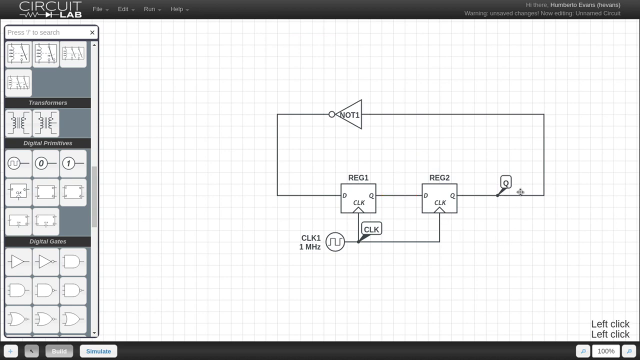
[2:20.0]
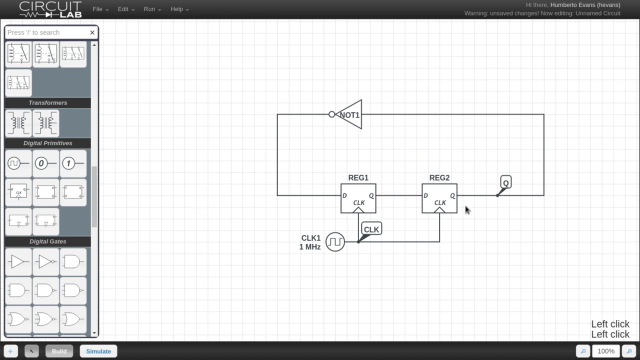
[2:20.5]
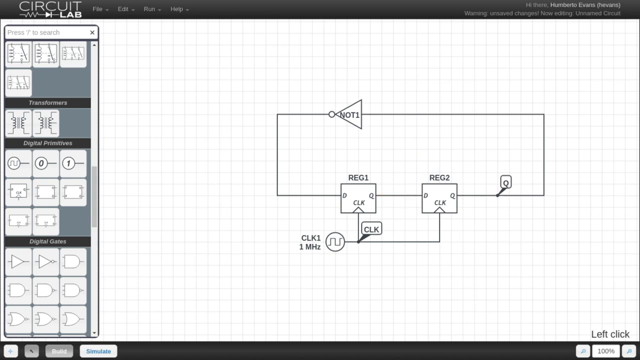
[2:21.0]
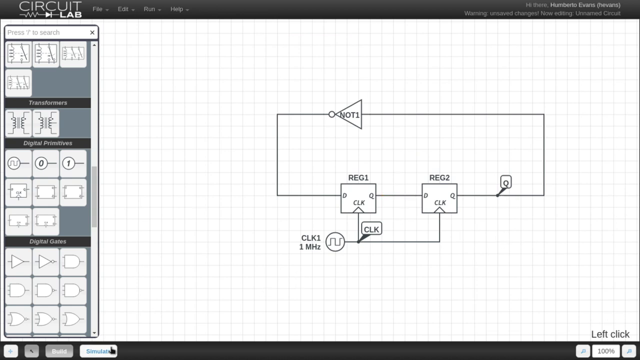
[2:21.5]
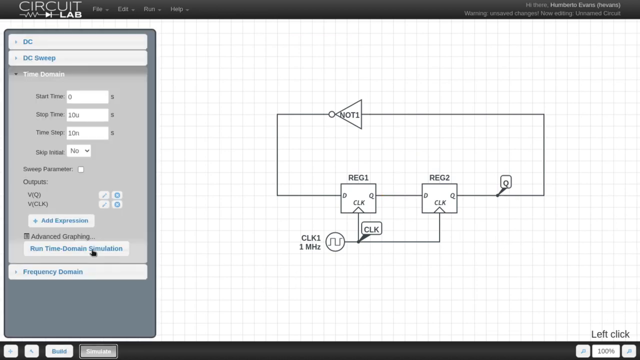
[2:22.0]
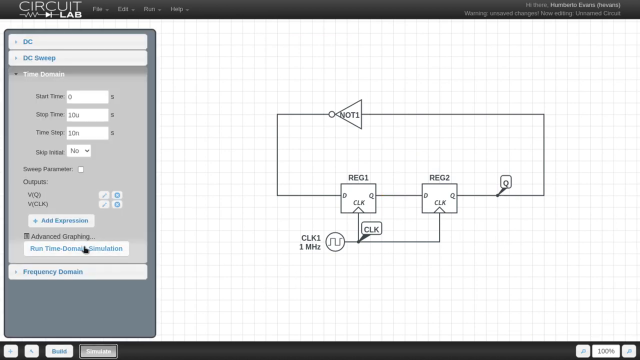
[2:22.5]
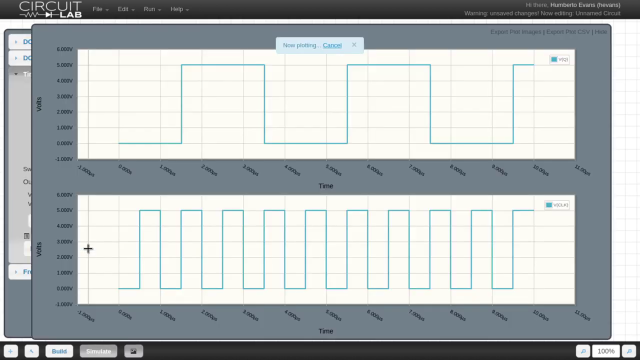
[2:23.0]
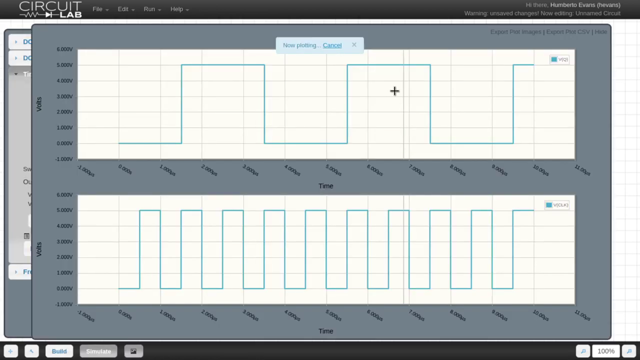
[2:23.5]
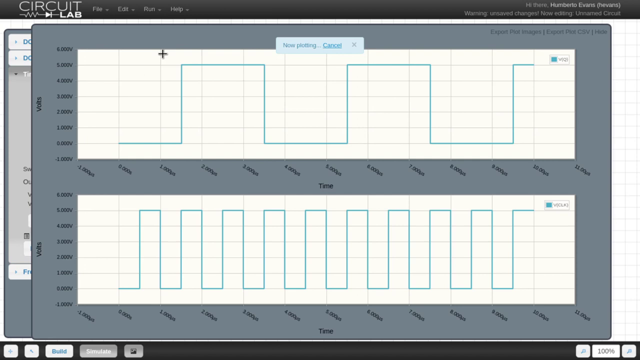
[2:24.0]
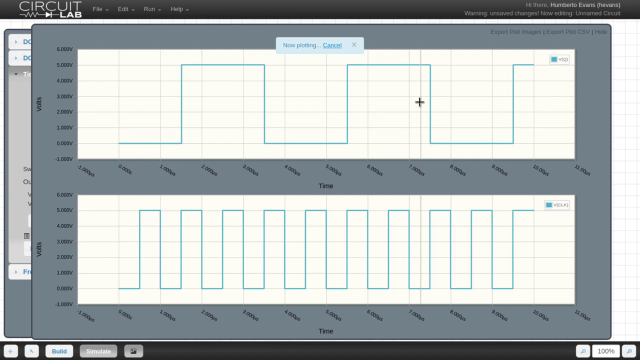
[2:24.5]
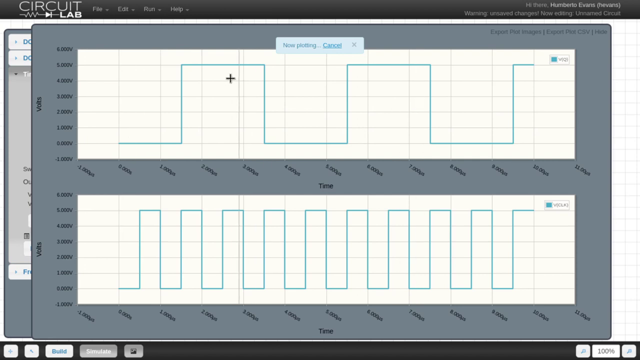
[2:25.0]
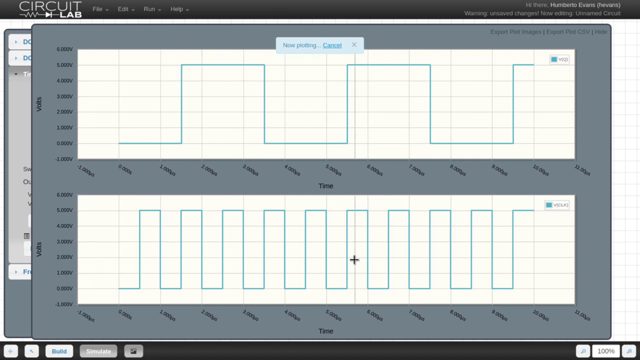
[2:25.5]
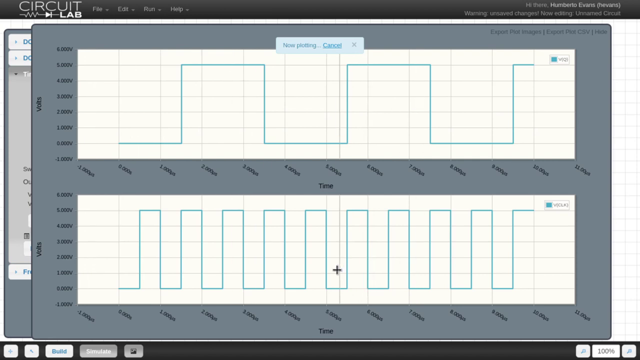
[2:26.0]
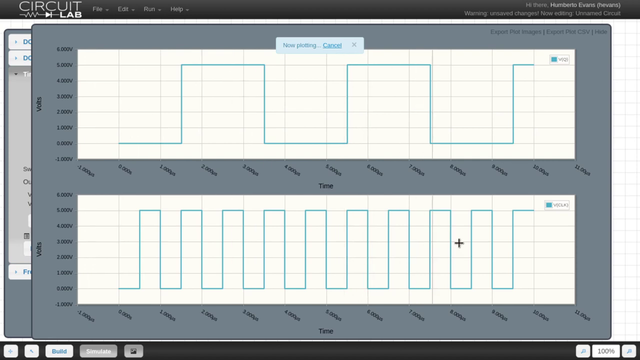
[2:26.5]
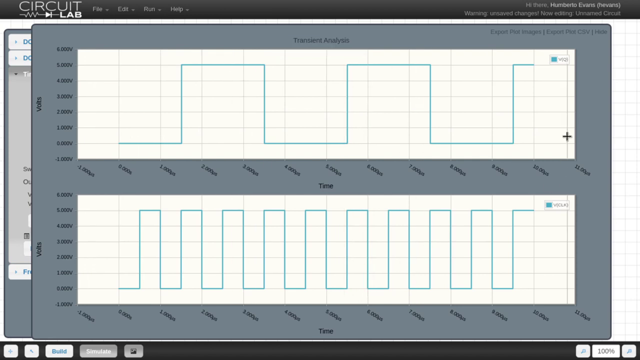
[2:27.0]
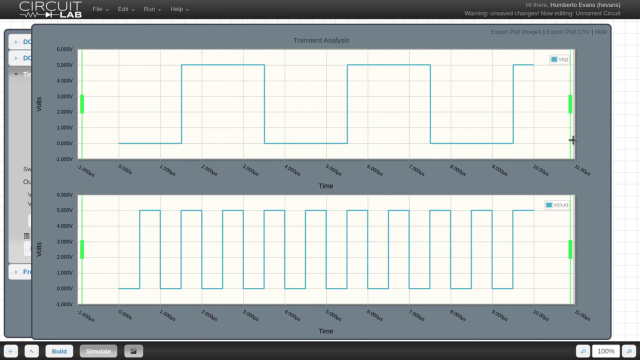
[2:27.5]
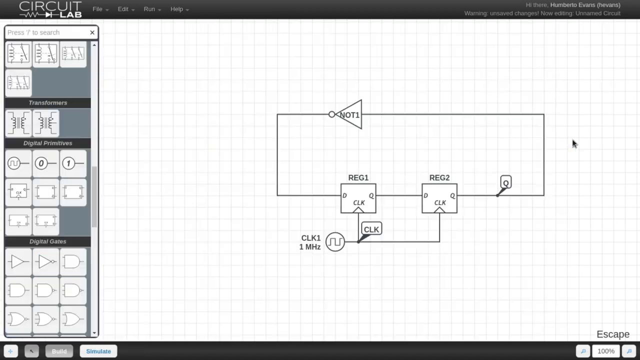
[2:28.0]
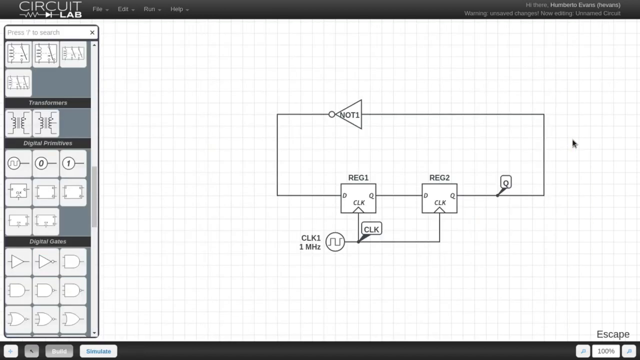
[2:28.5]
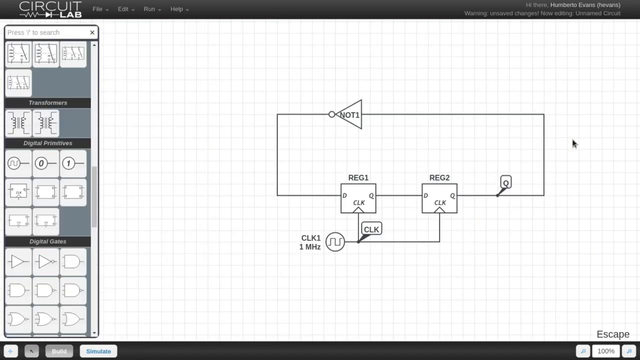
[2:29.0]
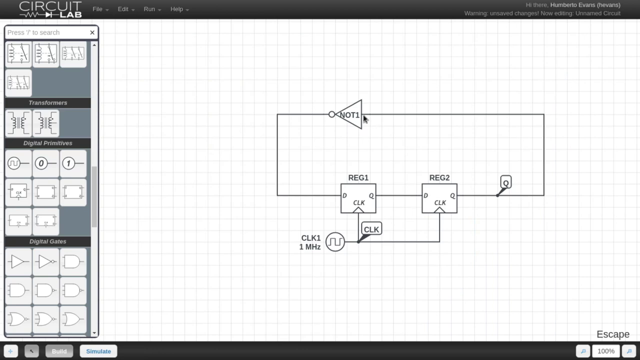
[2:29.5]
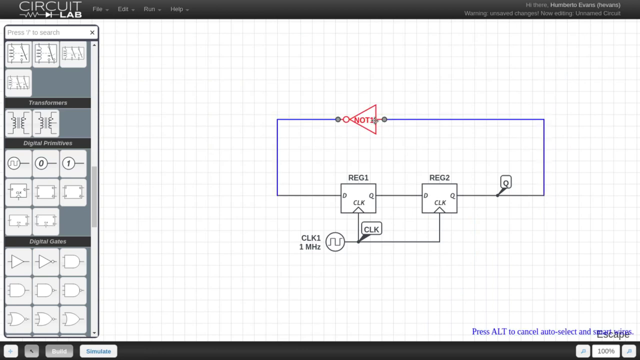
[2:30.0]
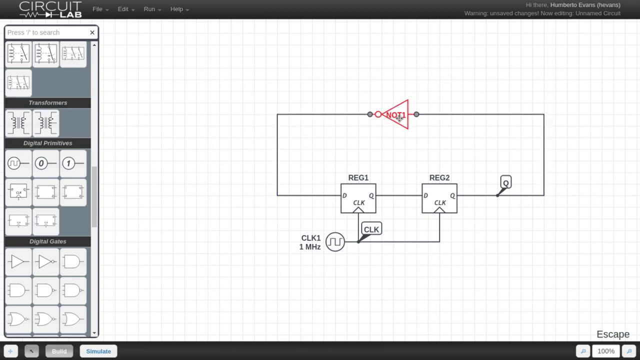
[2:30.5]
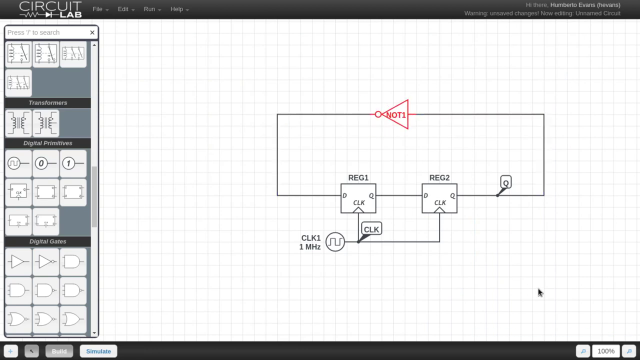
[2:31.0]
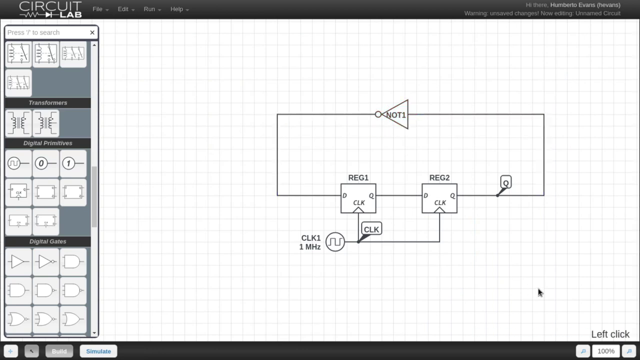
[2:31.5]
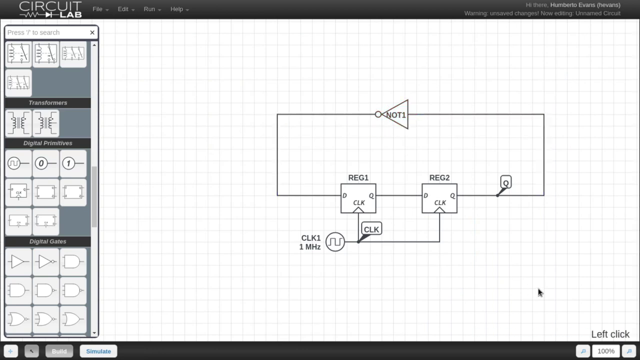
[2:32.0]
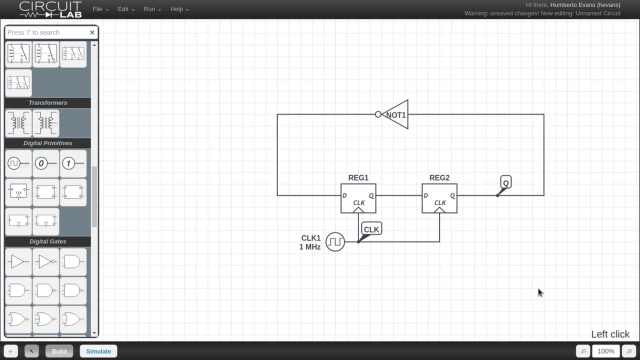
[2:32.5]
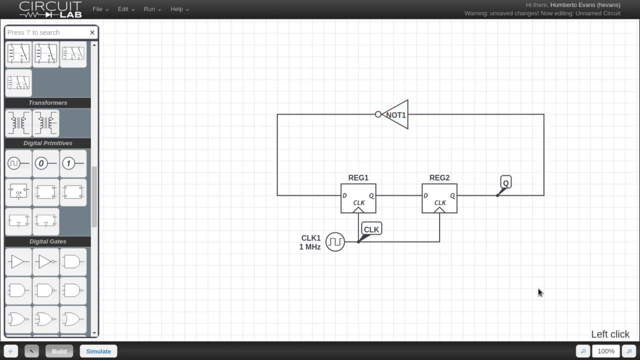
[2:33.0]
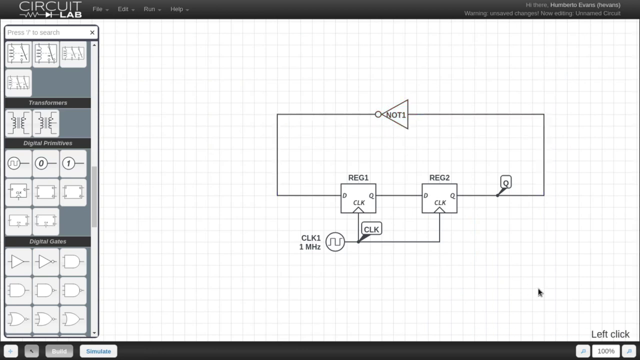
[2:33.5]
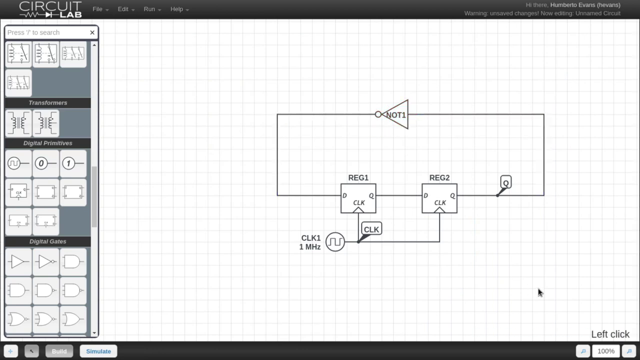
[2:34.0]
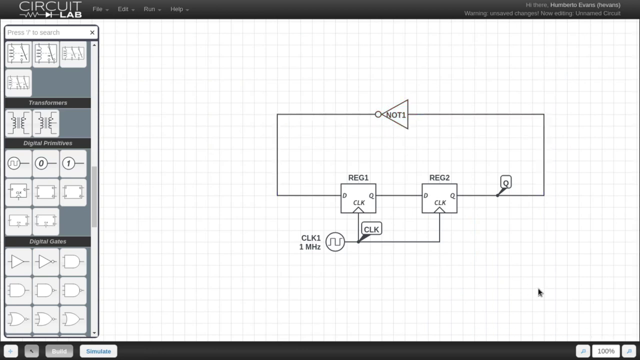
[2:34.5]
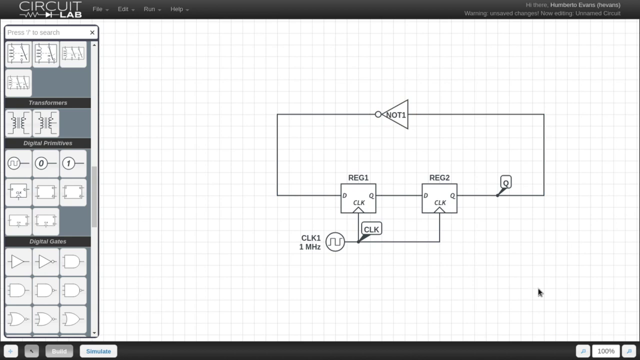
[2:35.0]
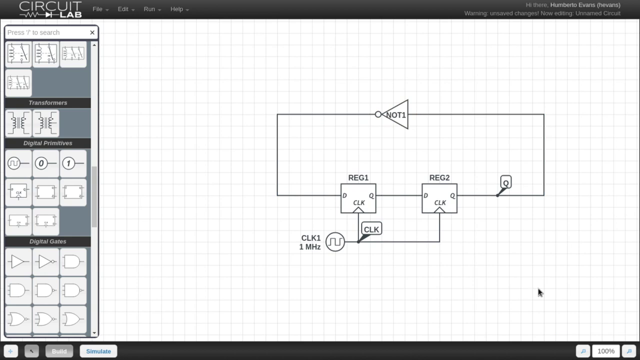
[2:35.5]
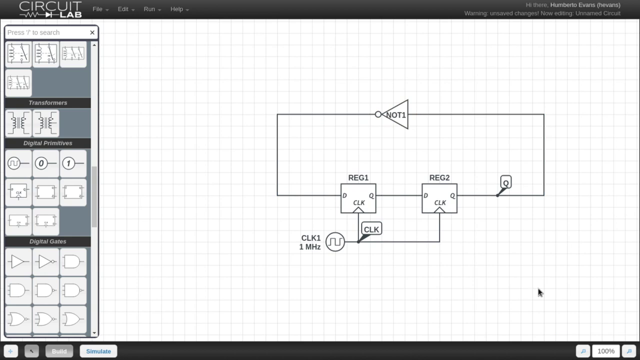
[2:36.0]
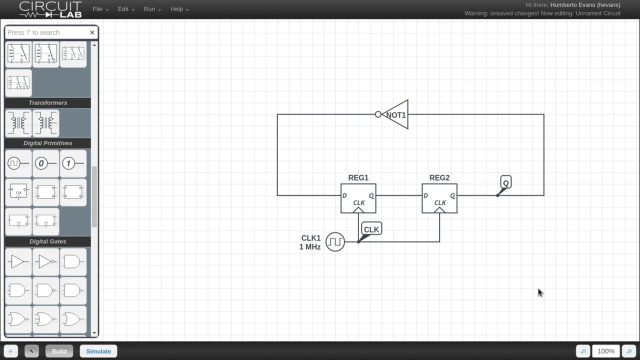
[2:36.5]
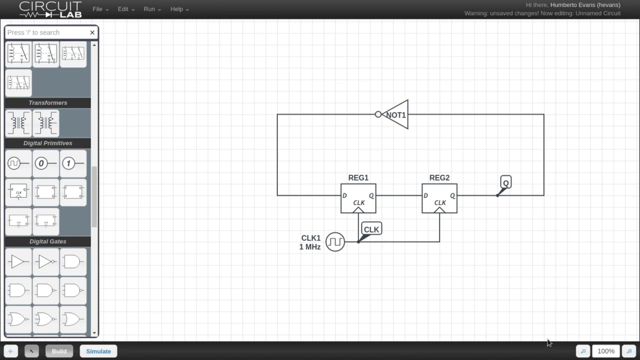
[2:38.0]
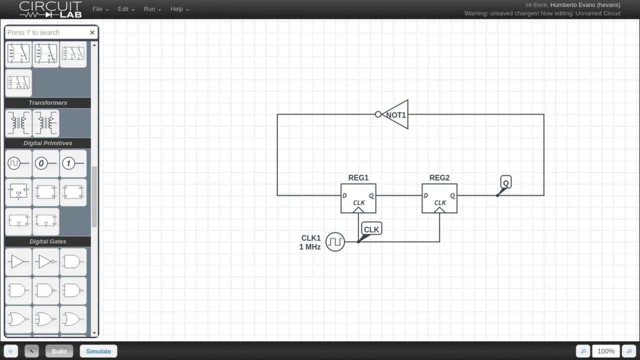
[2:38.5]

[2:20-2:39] A screencast of CIRCUIT LAB shows a white canvas with a circuit diagram and a tool selection panel on the left side. The cursor moves around the diagram, and a small window opens on the left that says "run time domain simulation". When it is pressed, a new window appears with two graphs, one wider than the other; both are fairly similar, blue and like a square, with time and volts shown. The cursor moves around both graphs. The window is then closed and the canvas with the diagram appears. The person grabs a triangle-shaped part of the diagram and moves it, showing how the size, form and position of the diagram's parts can be changed. The image then stays still for about 3 to 5 seconds, the cursor disappears, and the video stops.